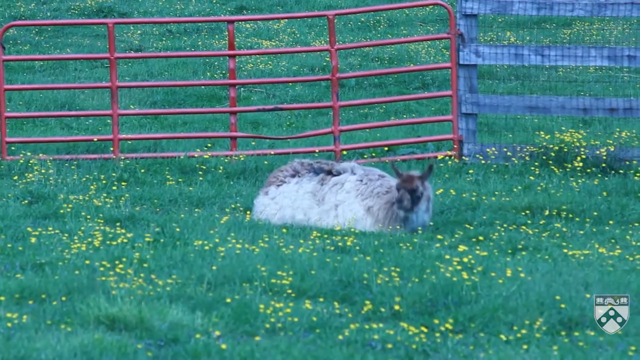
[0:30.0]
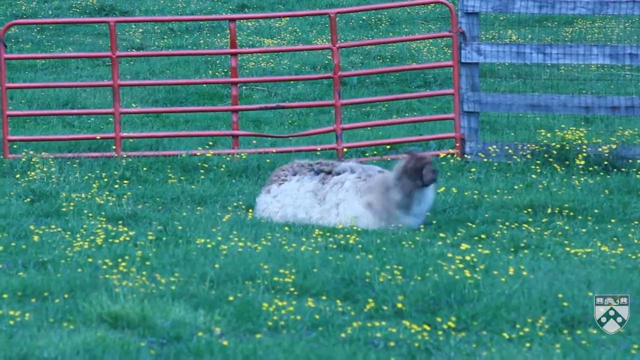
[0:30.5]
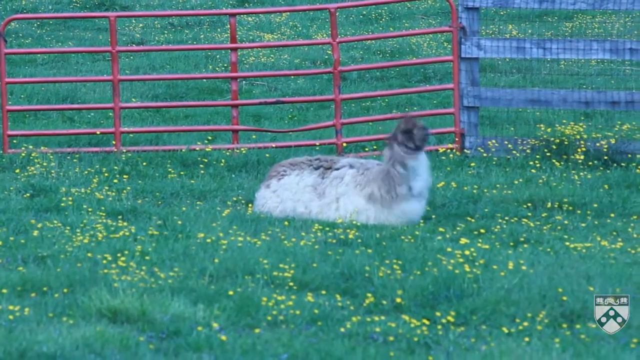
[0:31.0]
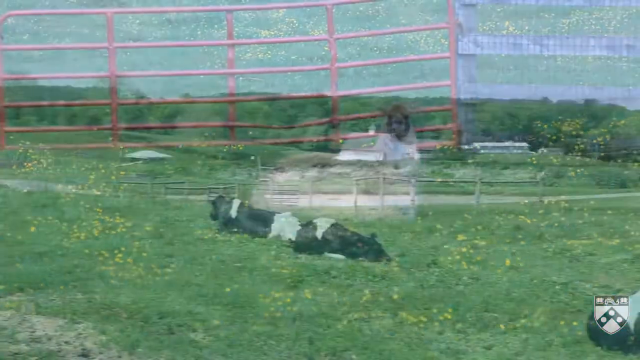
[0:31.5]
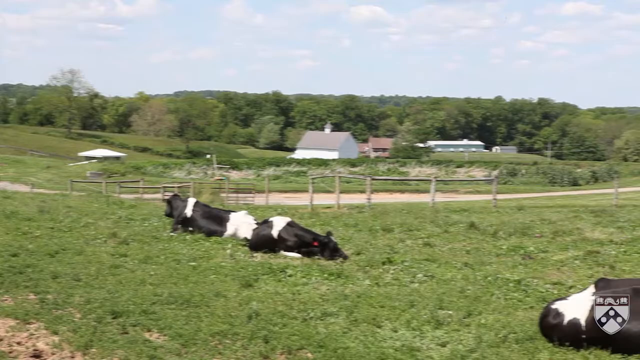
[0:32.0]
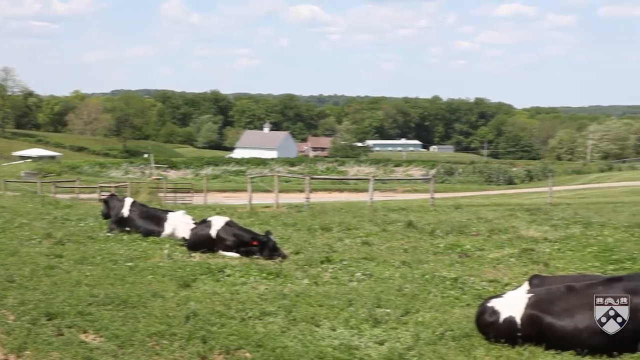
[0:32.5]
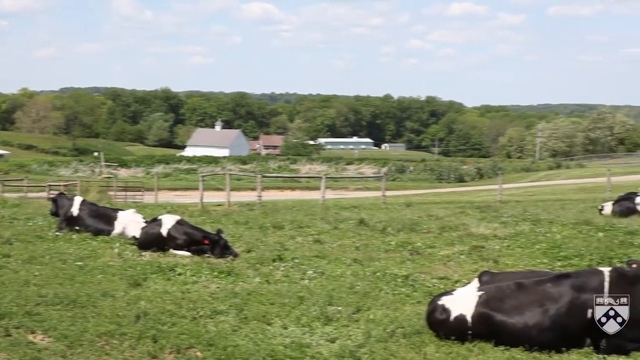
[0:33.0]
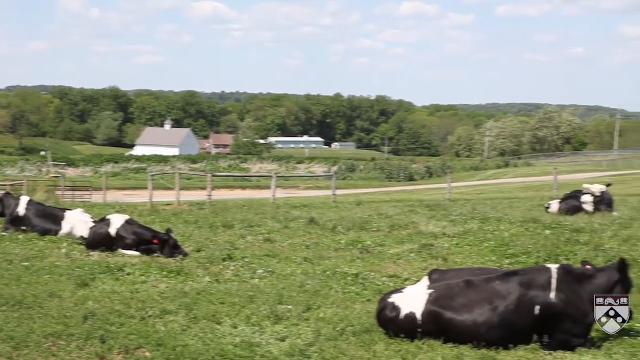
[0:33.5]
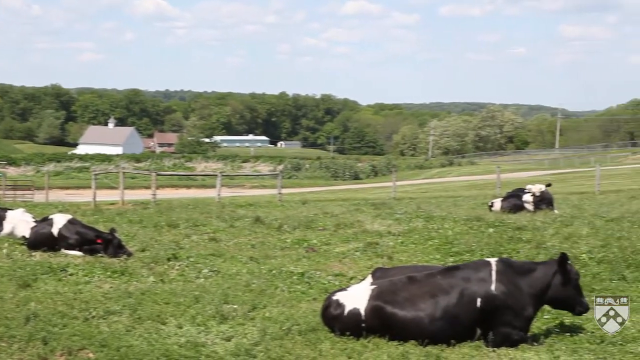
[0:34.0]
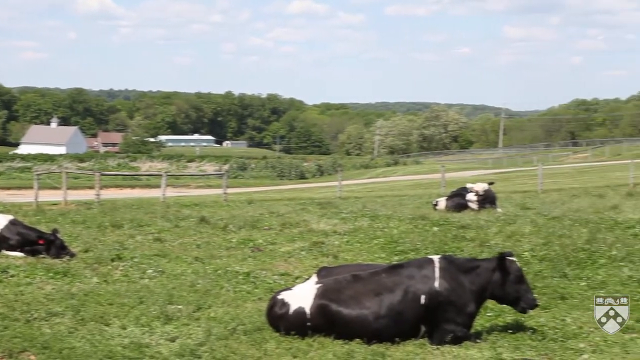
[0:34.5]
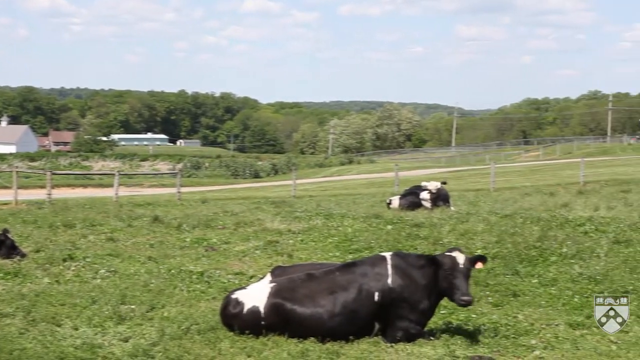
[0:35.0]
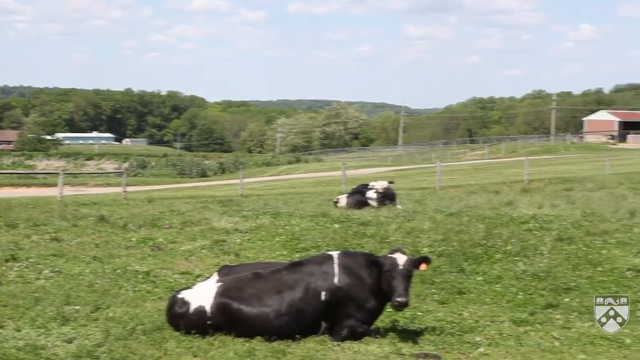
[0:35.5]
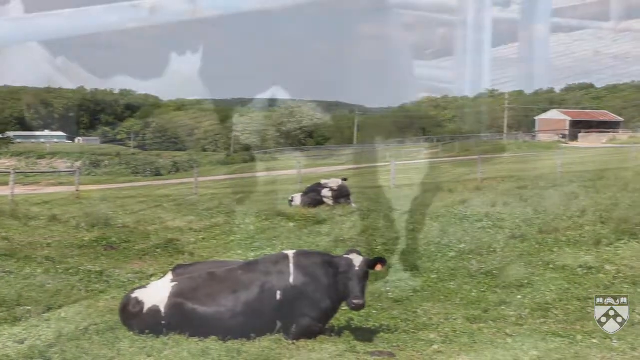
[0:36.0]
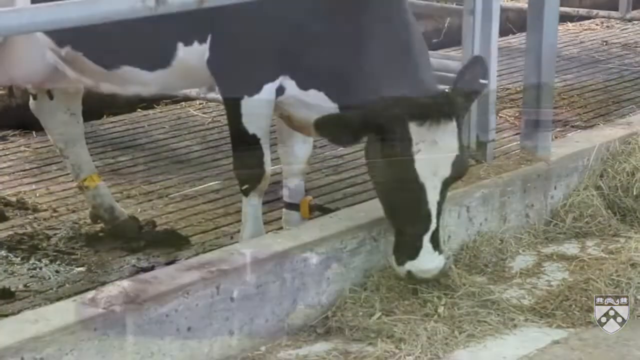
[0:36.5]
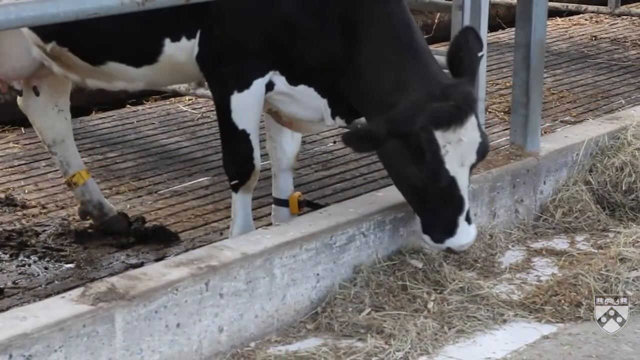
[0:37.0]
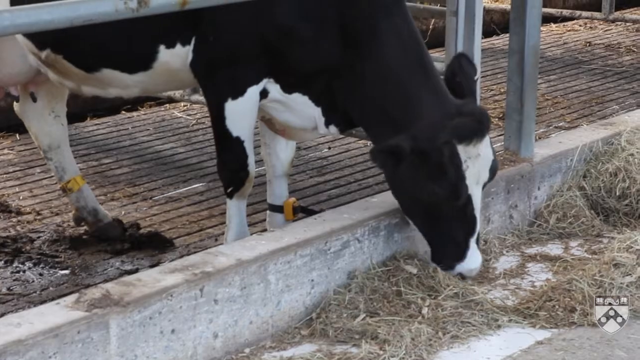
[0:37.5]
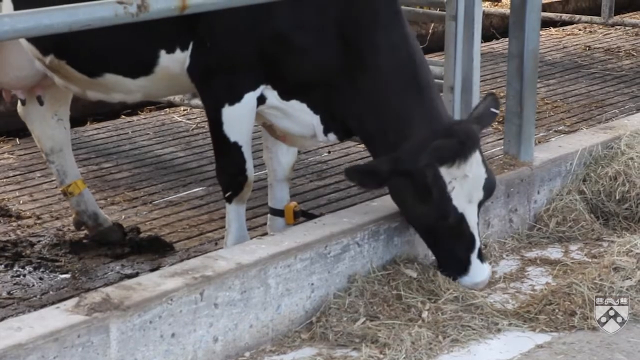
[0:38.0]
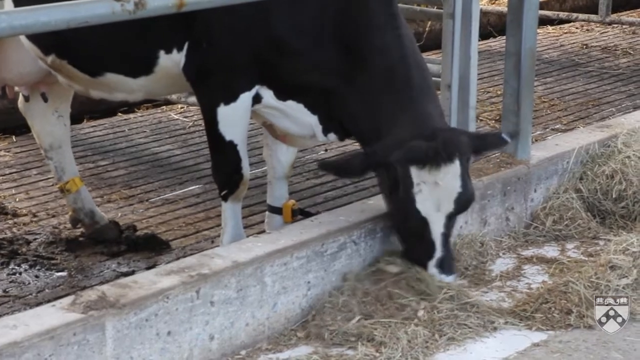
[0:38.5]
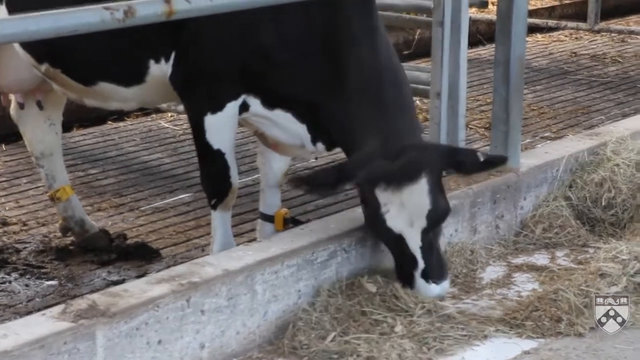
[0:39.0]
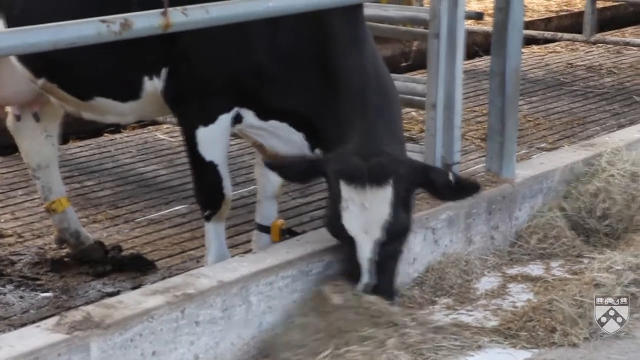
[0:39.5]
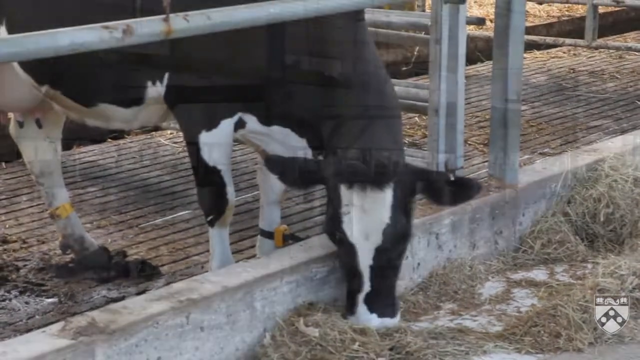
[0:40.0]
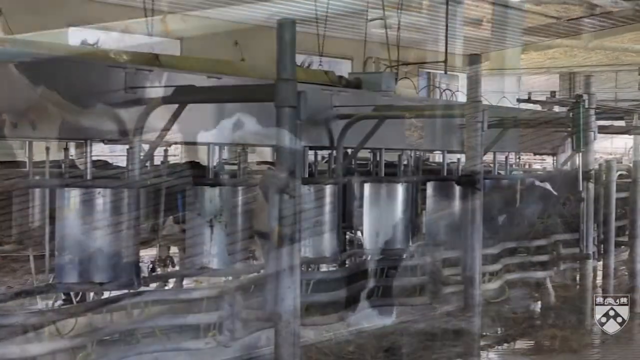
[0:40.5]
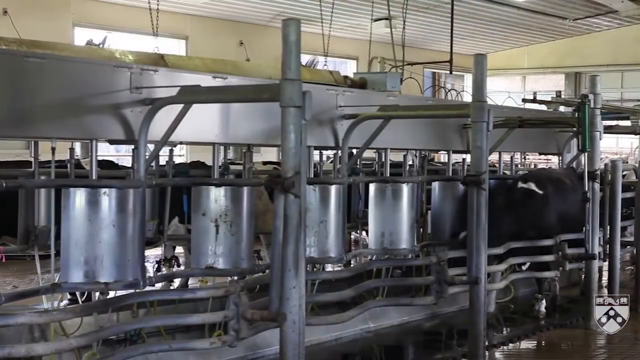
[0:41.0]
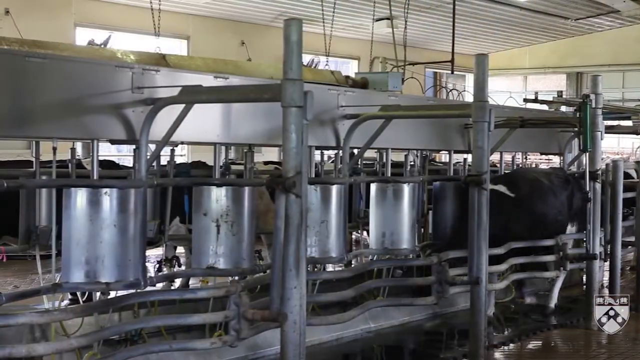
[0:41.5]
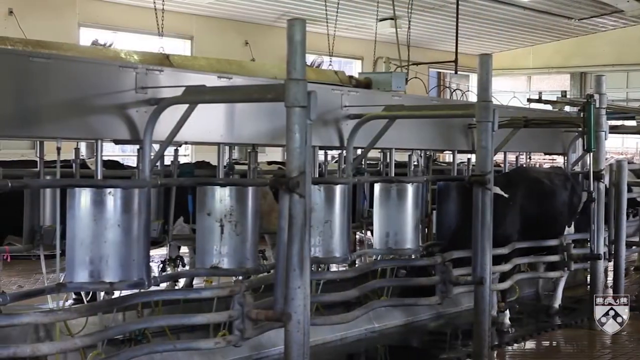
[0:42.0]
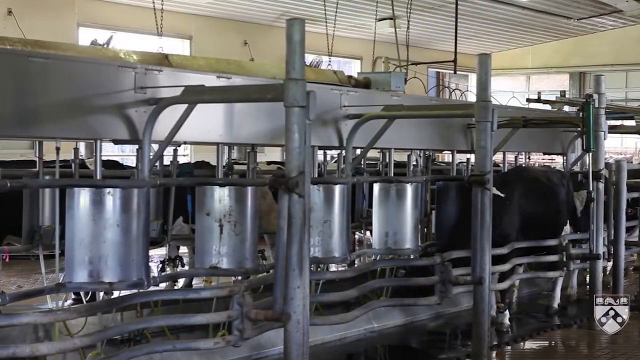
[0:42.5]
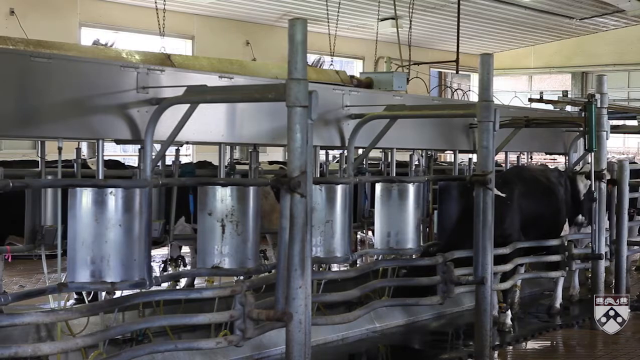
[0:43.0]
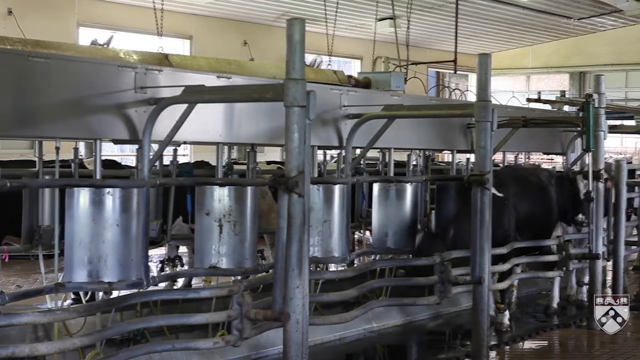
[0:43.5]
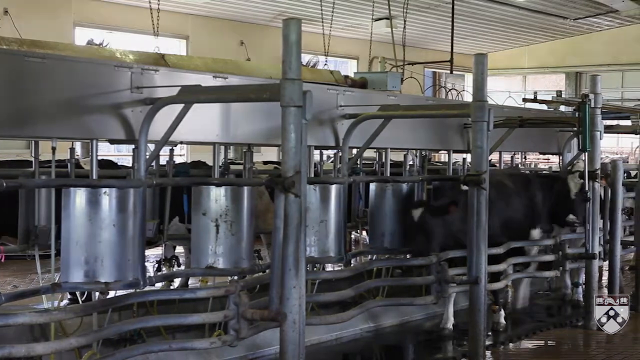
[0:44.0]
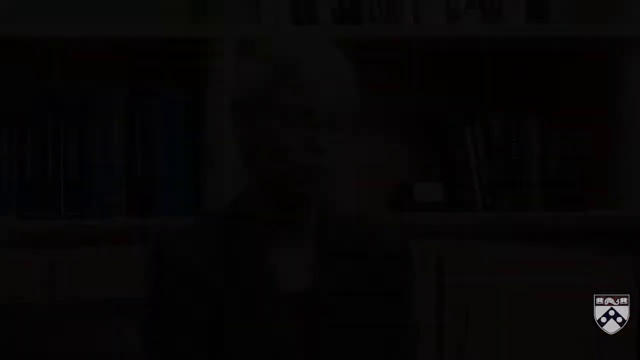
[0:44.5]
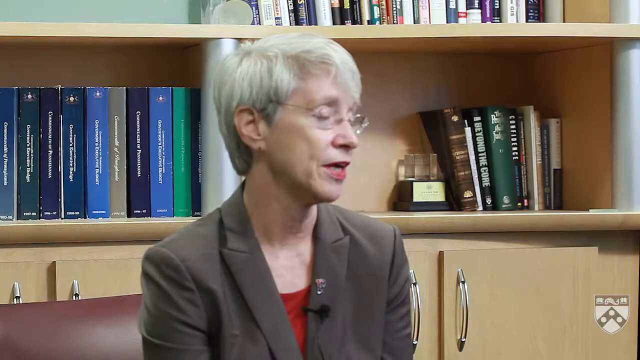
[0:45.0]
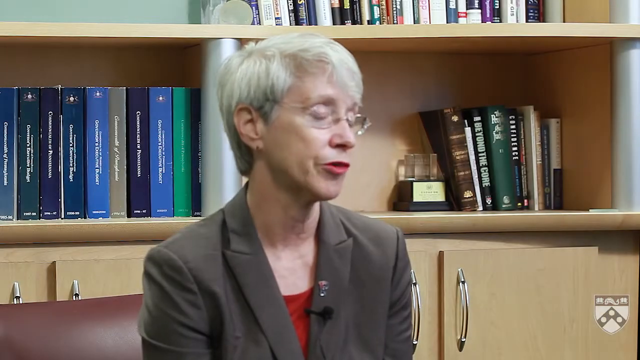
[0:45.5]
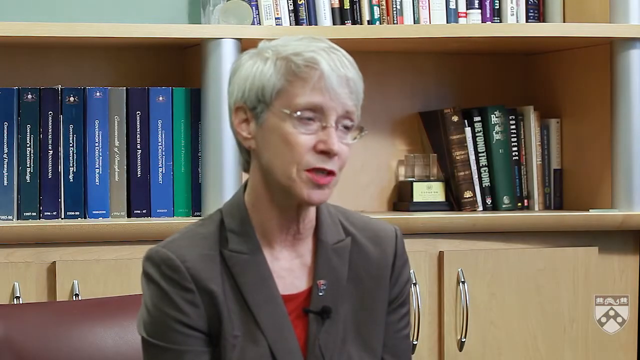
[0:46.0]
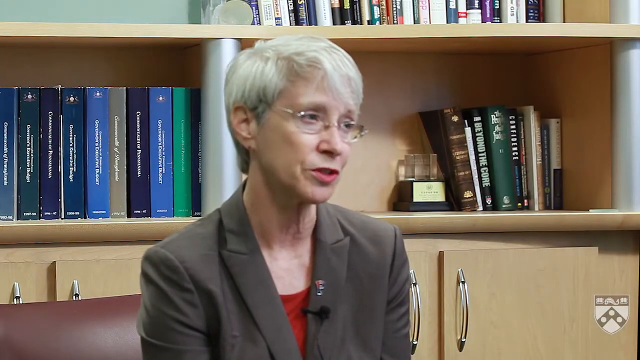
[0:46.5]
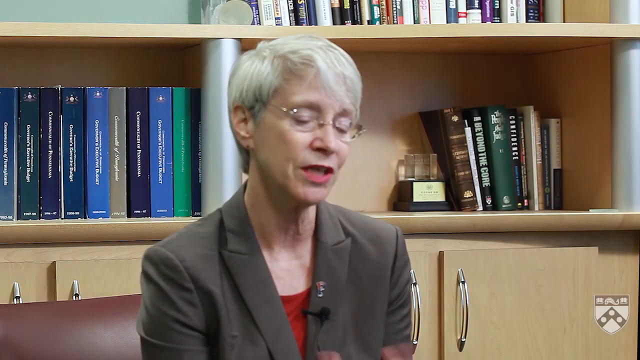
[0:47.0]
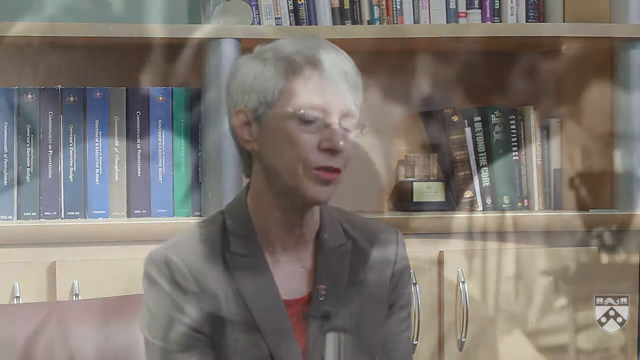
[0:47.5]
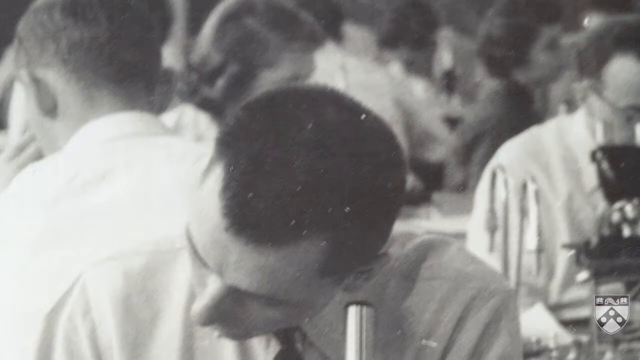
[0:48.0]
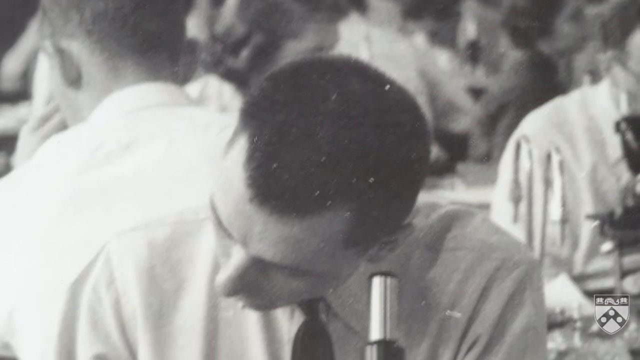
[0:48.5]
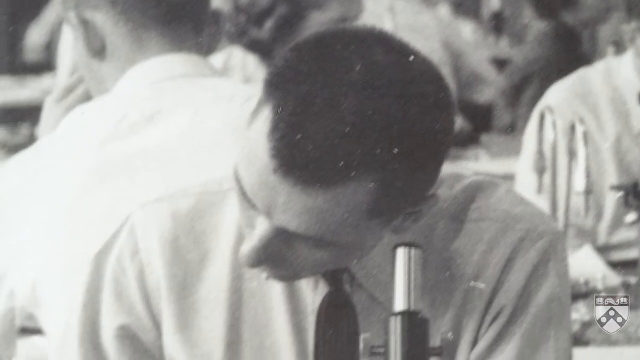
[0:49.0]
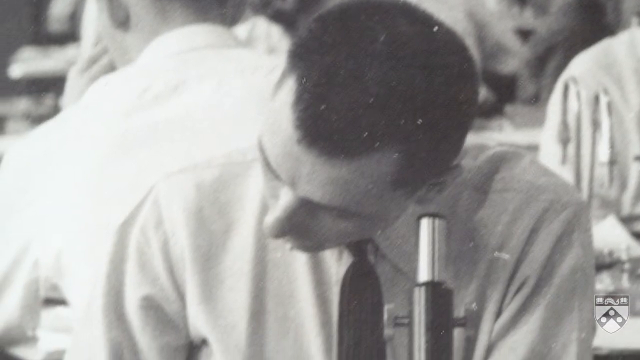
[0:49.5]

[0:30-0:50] A llama lies in a grassy field with little yellow flowers all around. The video cuts to about four or five cows in a grassy field, then to cows going into a milking area where they are fed and milked; they are probably dairy cows. A black-and-white scene follows in which a dark-haired man in a white dress shirt and black tie sits in front of a microscope. A man is behind him and another man further behind, and two more men are toward his upper right.